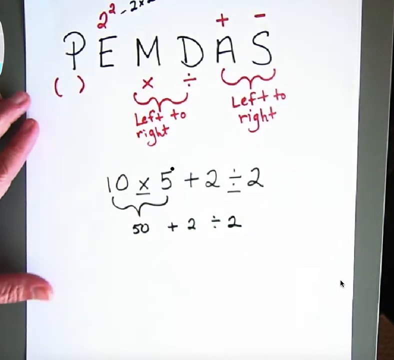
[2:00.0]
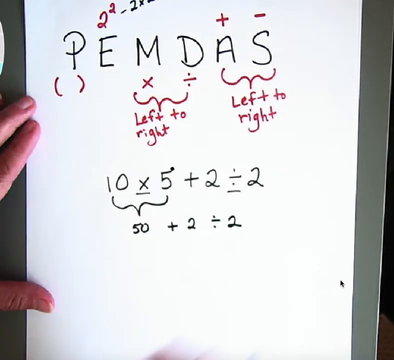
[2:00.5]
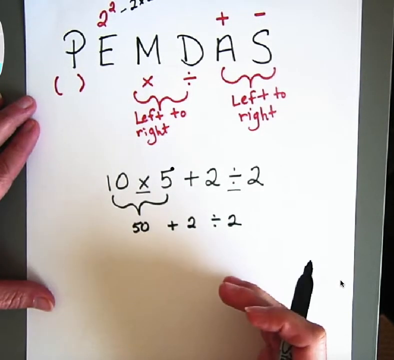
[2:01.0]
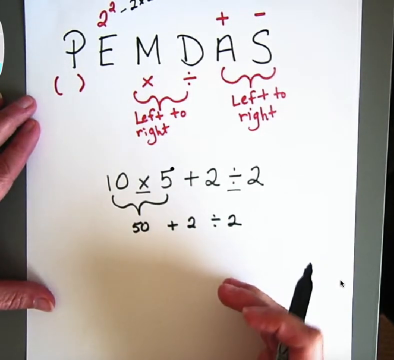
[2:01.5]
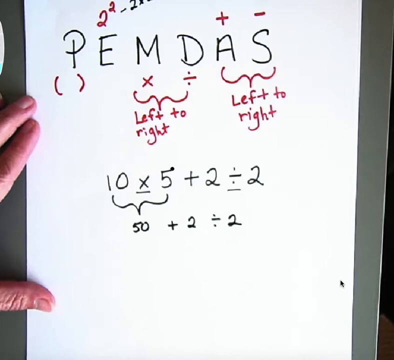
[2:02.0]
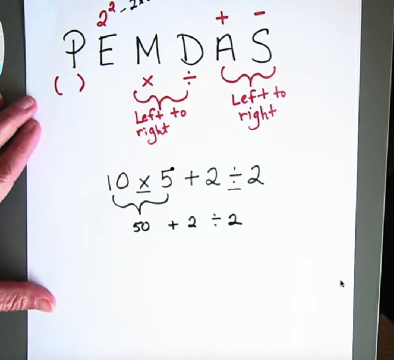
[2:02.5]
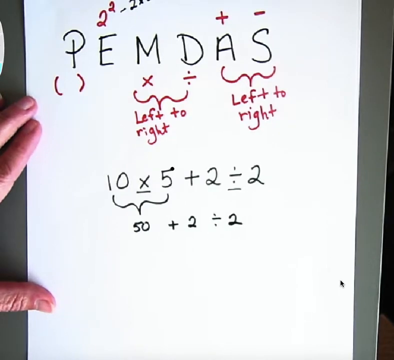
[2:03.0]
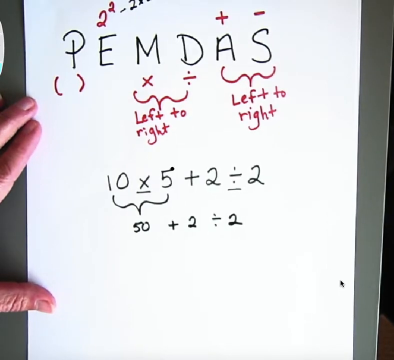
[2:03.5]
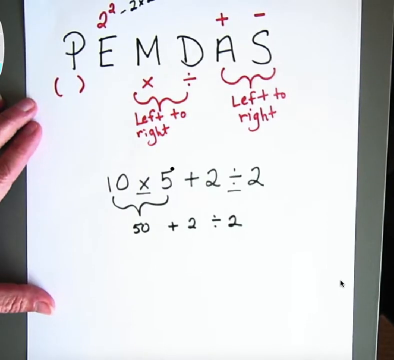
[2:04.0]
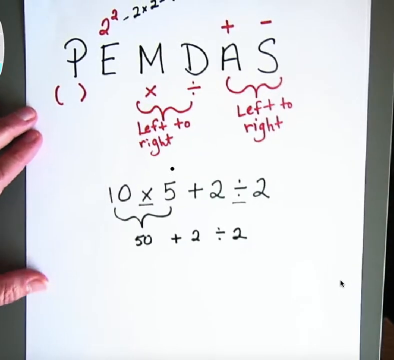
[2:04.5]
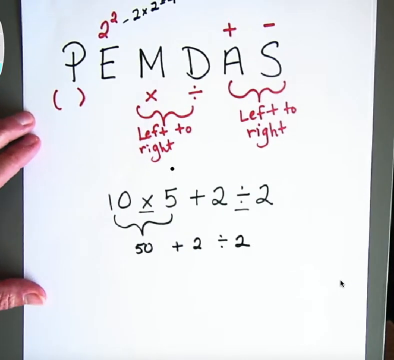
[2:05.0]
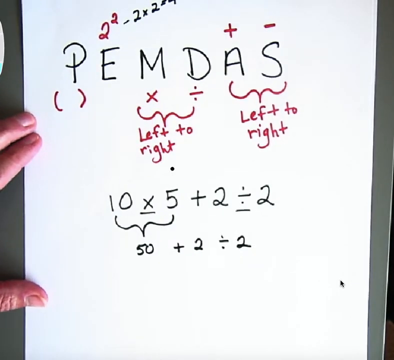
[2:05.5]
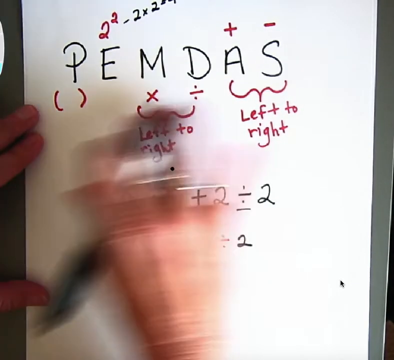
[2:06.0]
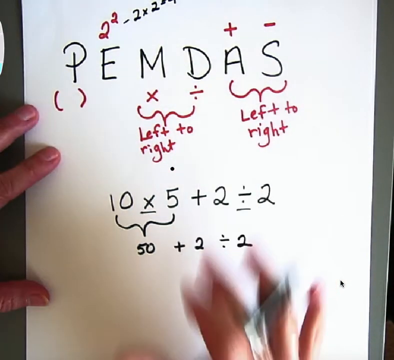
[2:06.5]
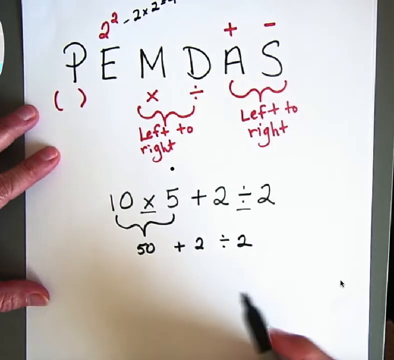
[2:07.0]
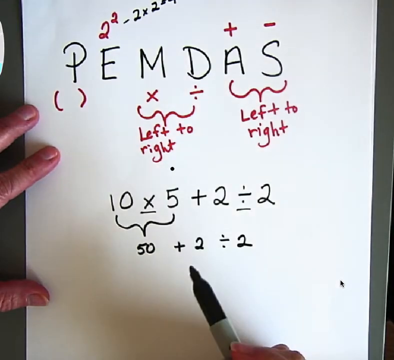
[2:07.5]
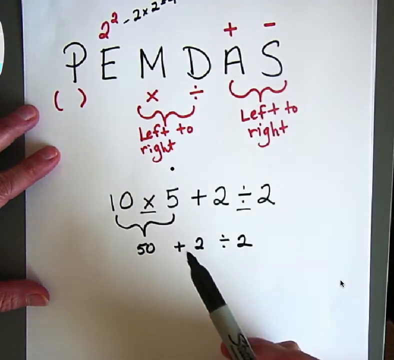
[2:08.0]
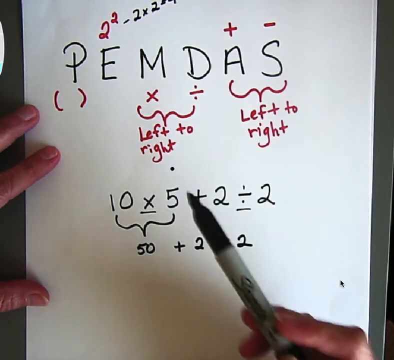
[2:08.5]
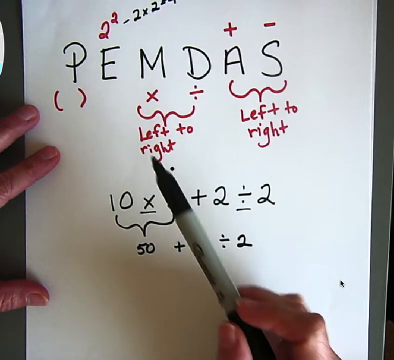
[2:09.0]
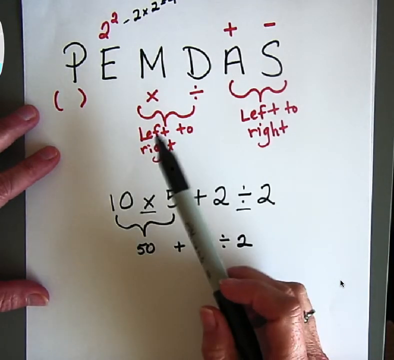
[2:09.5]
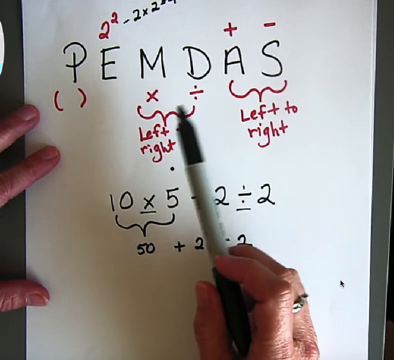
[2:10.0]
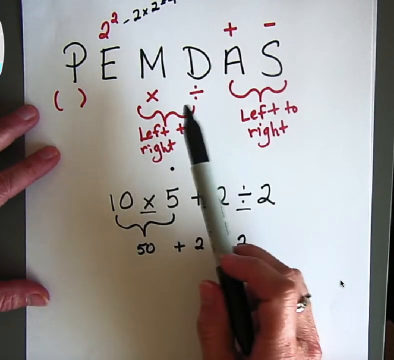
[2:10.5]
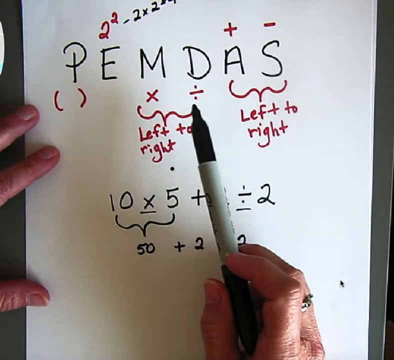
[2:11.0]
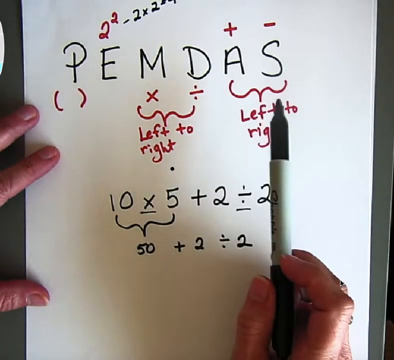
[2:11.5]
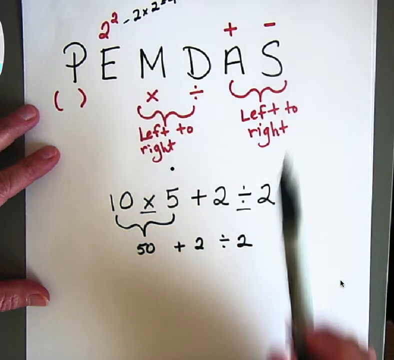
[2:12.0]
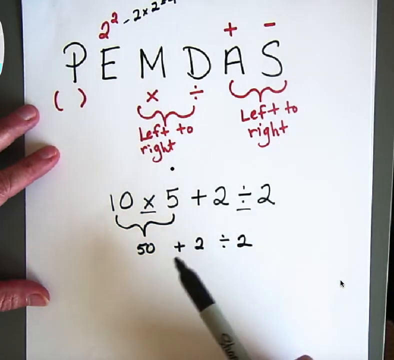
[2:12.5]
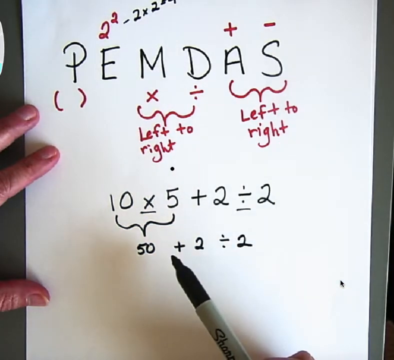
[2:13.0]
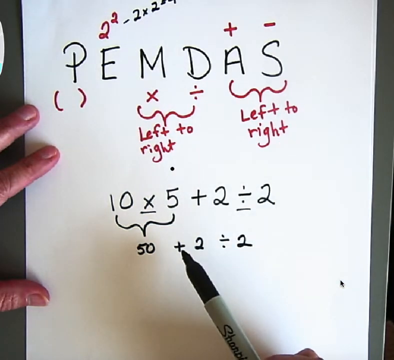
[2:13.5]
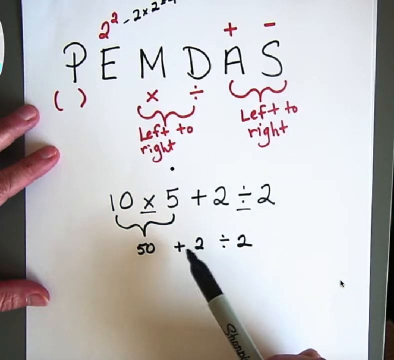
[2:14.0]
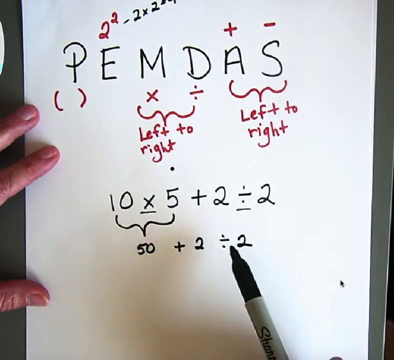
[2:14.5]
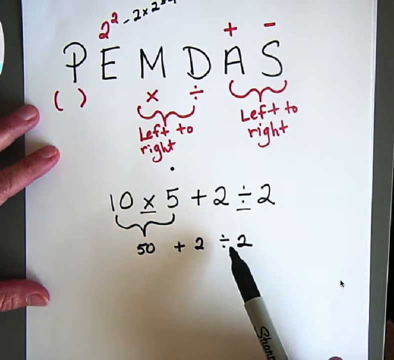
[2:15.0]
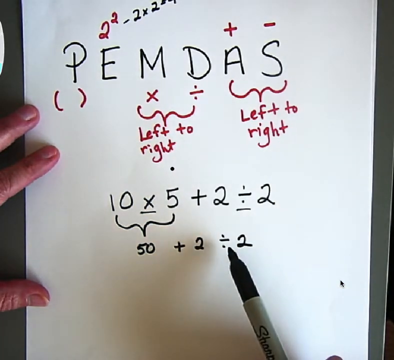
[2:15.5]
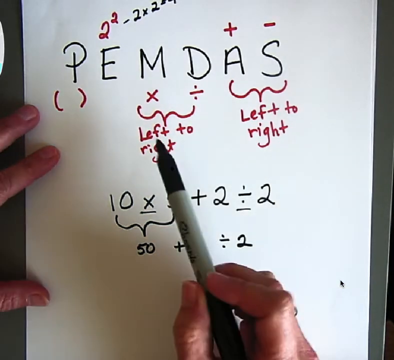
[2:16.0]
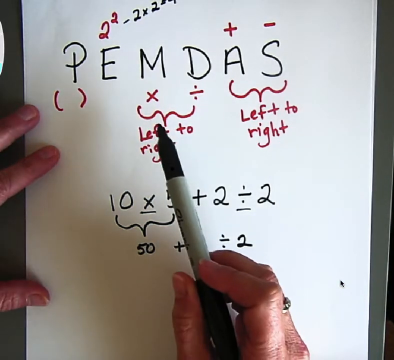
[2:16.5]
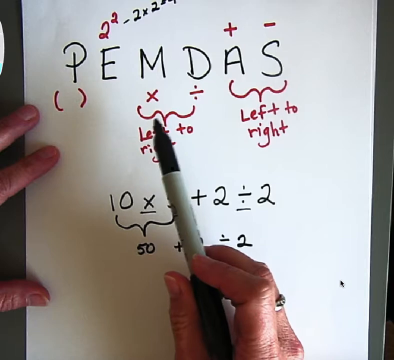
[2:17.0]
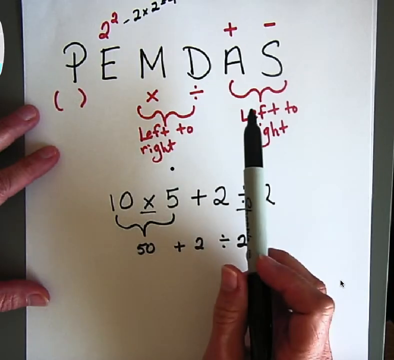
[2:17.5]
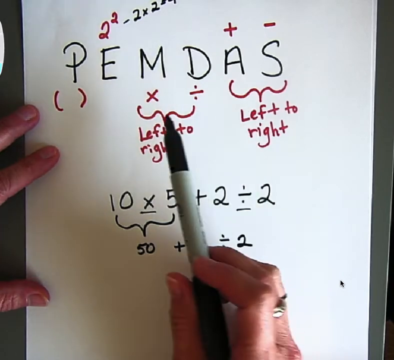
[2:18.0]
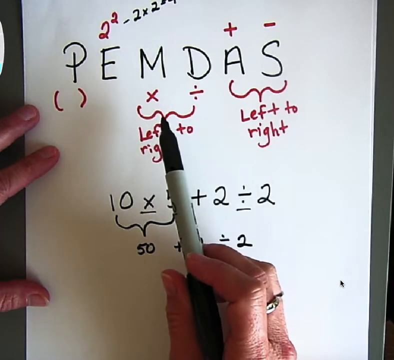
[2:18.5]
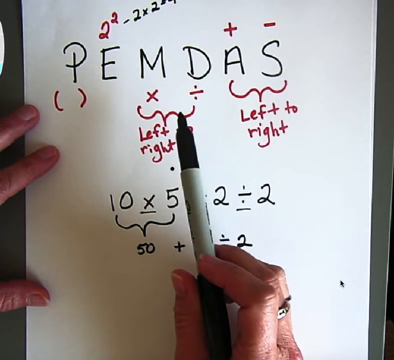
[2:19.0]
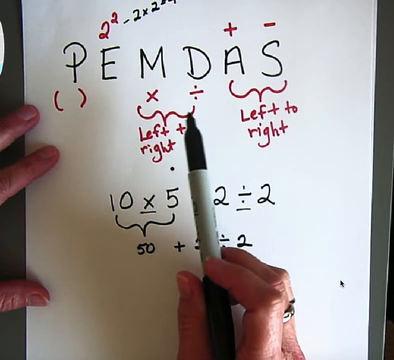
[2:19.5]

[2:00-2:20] A white piece of paper has "PEMDAS" at the top in black, each letter spaced apart. A hand holds the left side of the paper, and a hand comes in briefly with the marker. The view is a close-up of the paper. The hand swipes across the paper to show the information on it. The marker then goes to the X and to the division sign, and goes down to the formula where he wrote 50 plus 2 divided by 2. He points the marker toward the M, then toward the D. There is a red parenthesis under the P, a red multiplication sign under the M, a division sign under the D, a wiggly sign under the A and S, and a wiggly sign under the M and D. Both wiggly signs lead to a statement written in red, "left to right". Under that is a math formula, 10 times 5 plus 2 divided by 2, and under the 10 times 5 a wiggly line leads to another formula, 50 plus 2 divided by 2.